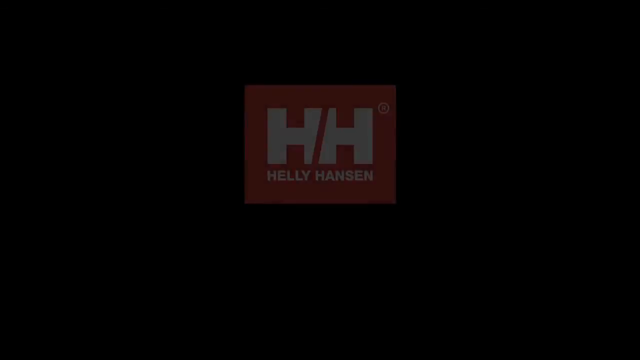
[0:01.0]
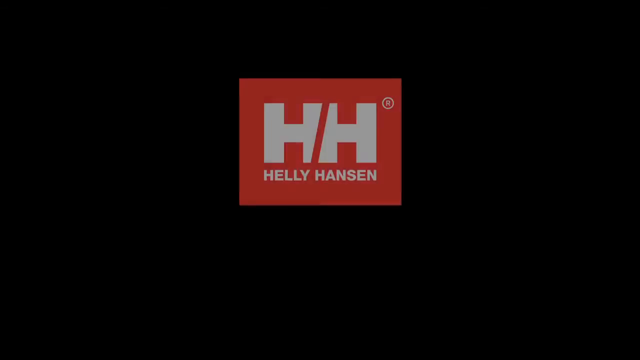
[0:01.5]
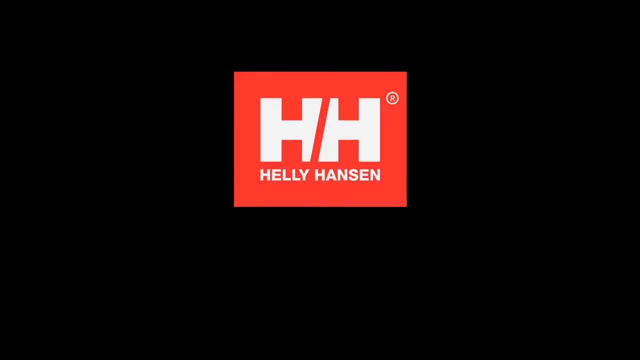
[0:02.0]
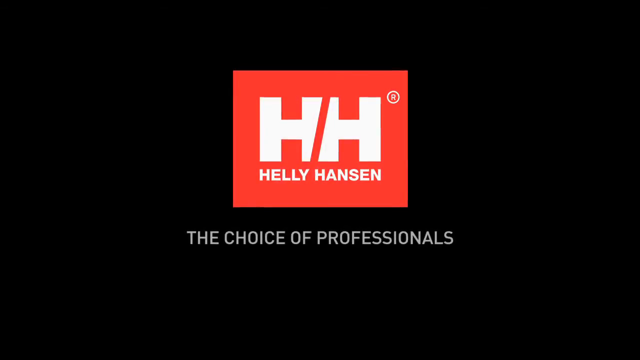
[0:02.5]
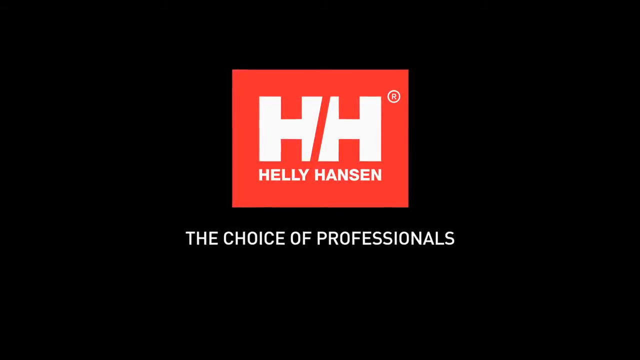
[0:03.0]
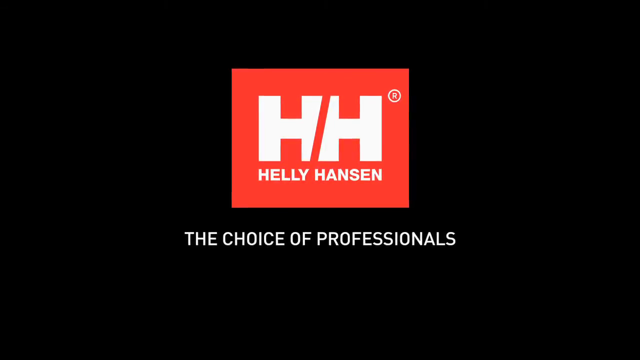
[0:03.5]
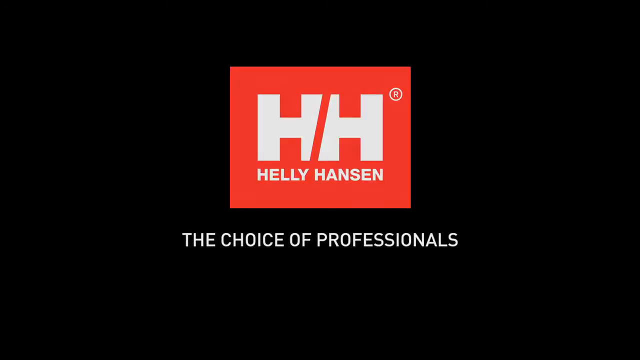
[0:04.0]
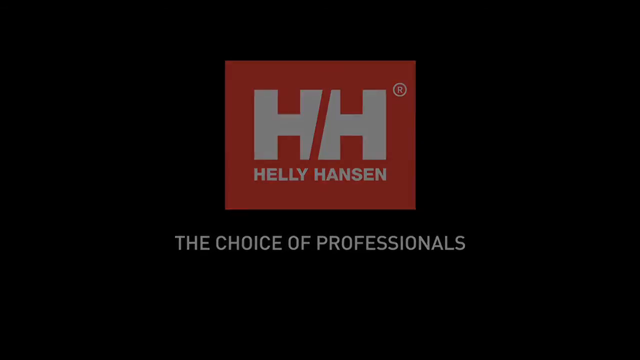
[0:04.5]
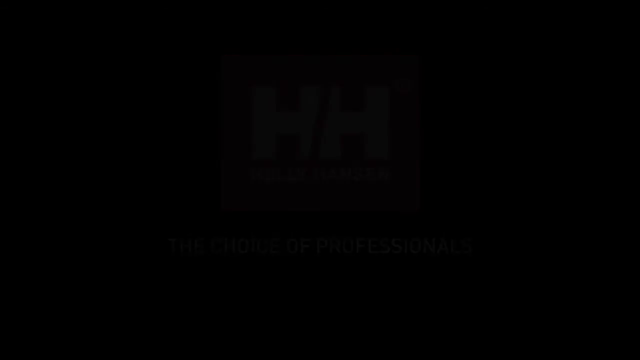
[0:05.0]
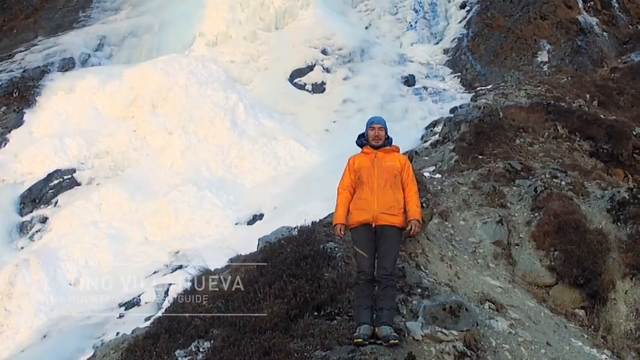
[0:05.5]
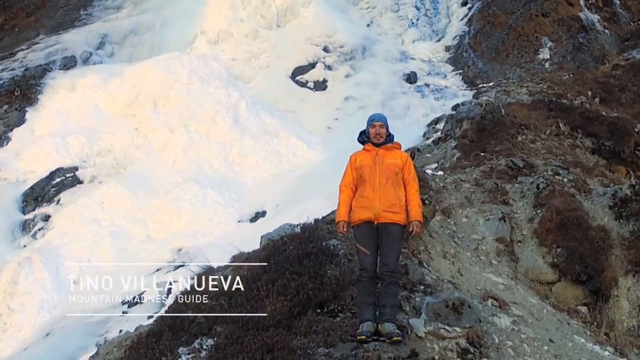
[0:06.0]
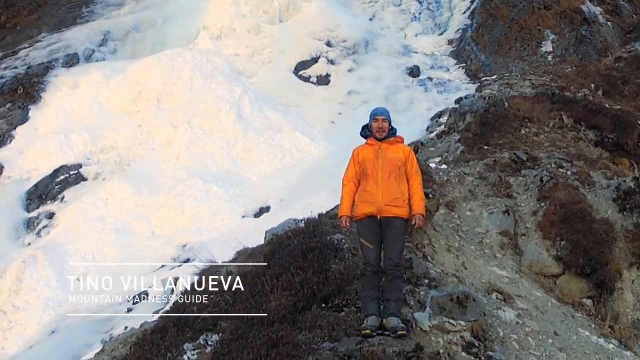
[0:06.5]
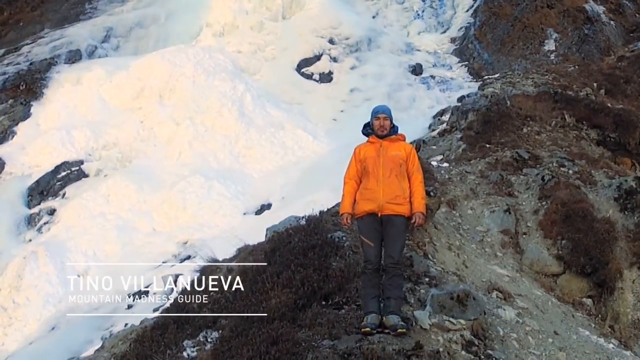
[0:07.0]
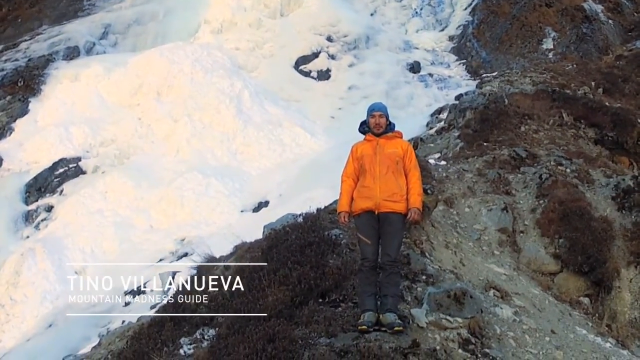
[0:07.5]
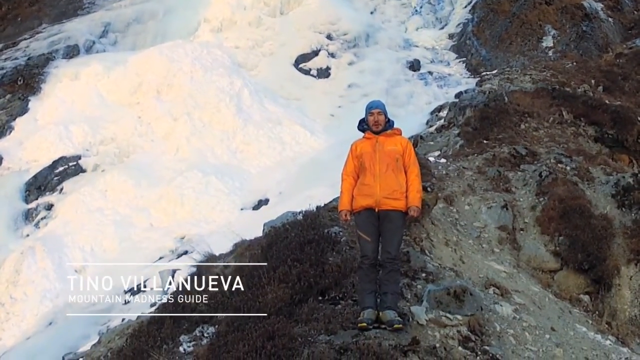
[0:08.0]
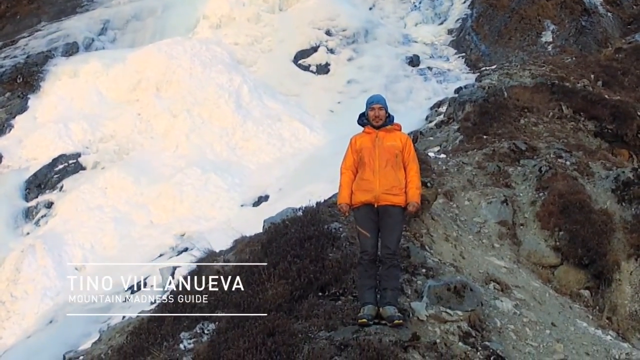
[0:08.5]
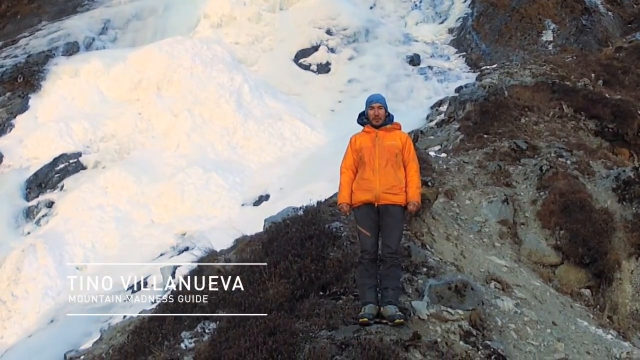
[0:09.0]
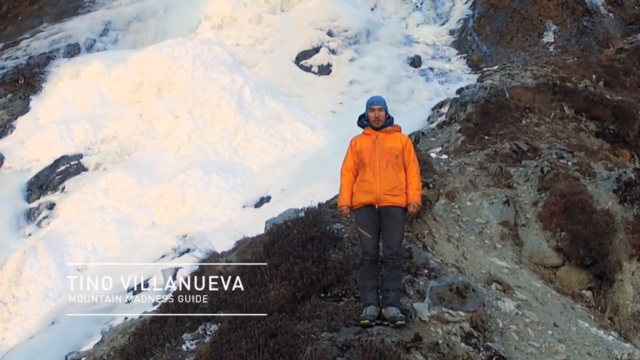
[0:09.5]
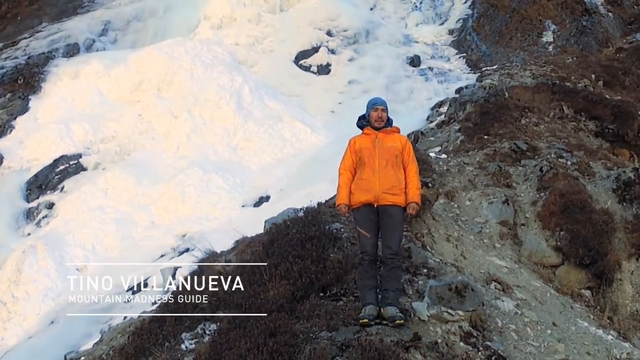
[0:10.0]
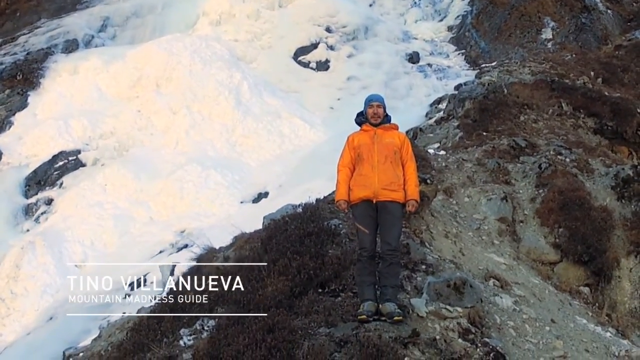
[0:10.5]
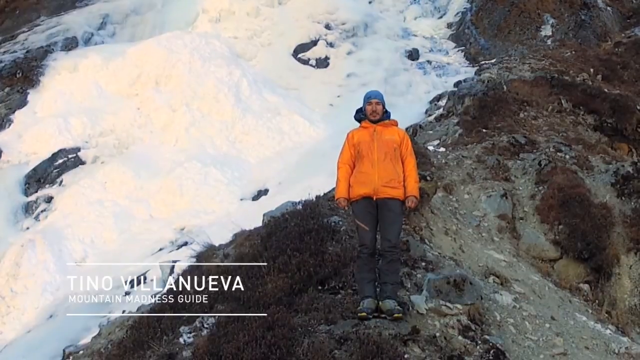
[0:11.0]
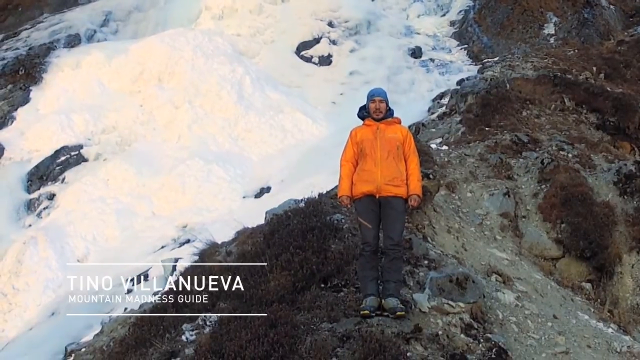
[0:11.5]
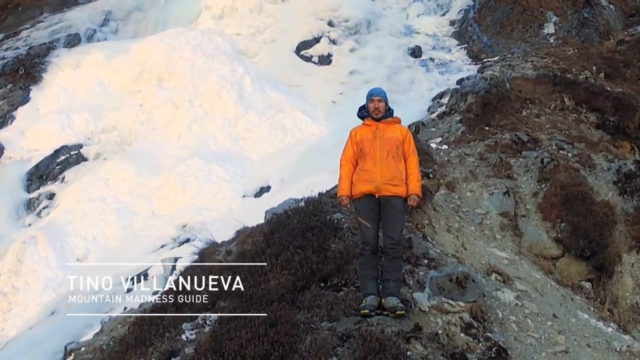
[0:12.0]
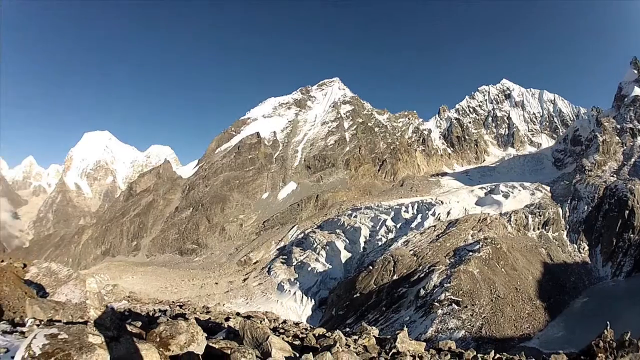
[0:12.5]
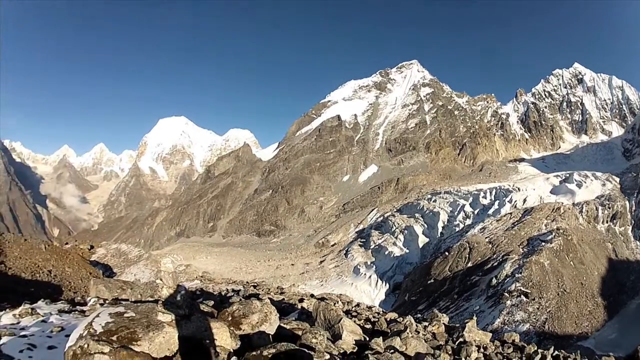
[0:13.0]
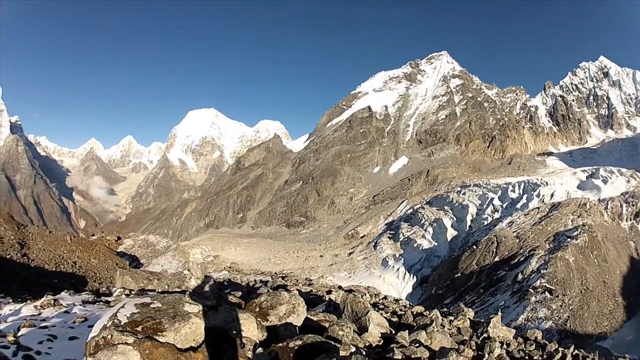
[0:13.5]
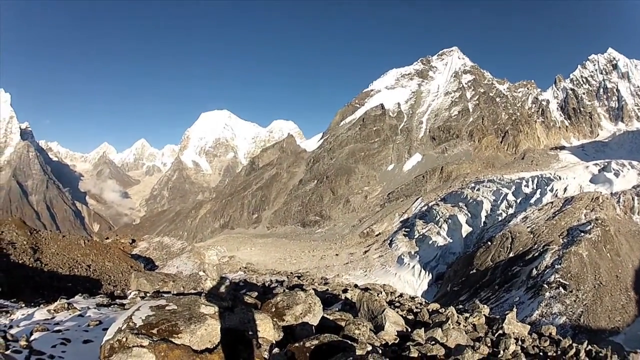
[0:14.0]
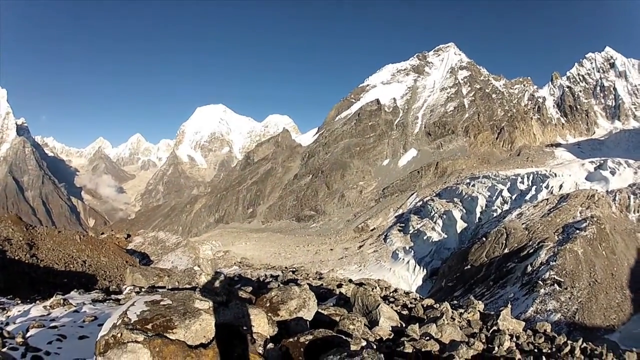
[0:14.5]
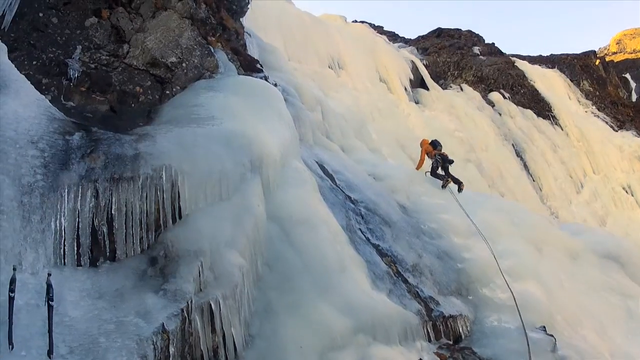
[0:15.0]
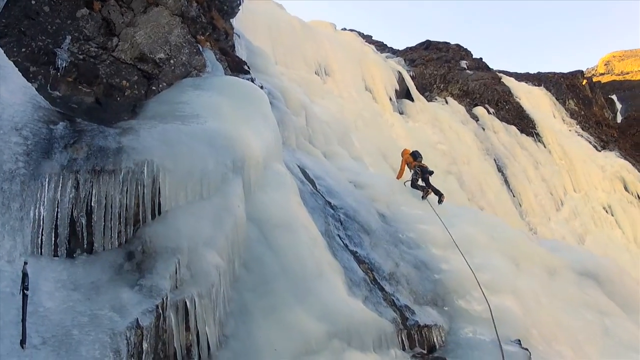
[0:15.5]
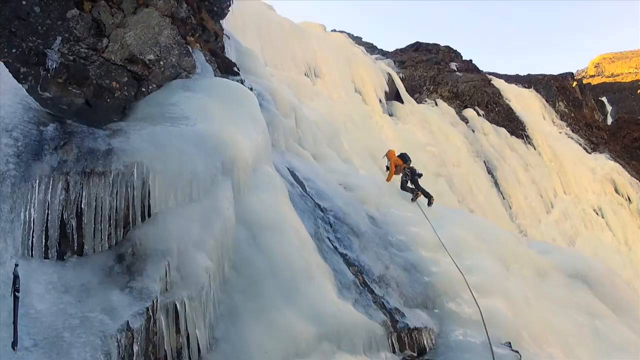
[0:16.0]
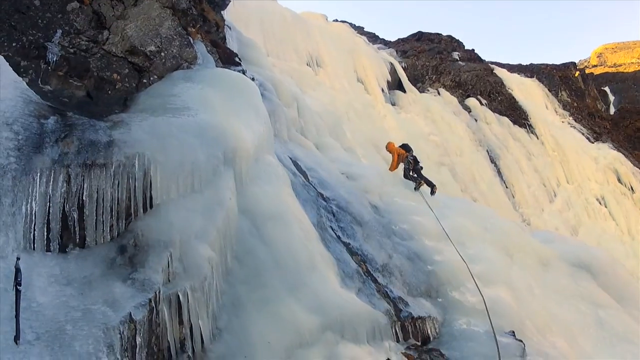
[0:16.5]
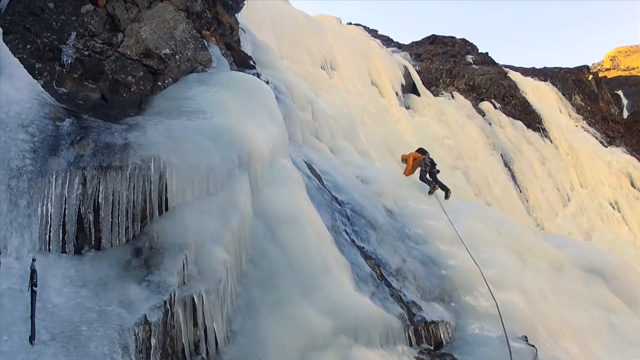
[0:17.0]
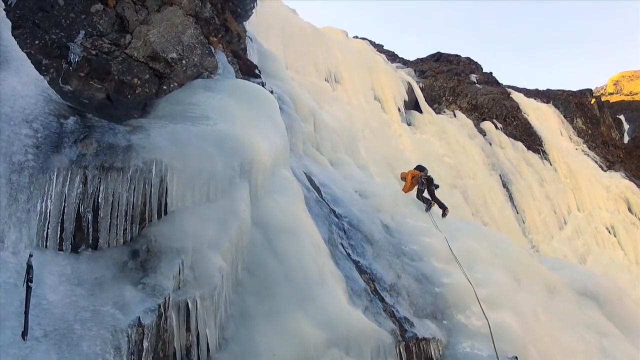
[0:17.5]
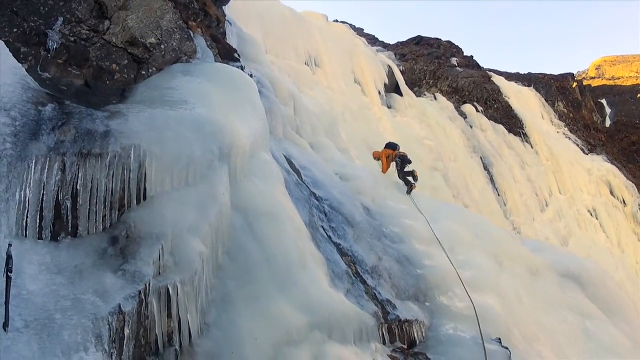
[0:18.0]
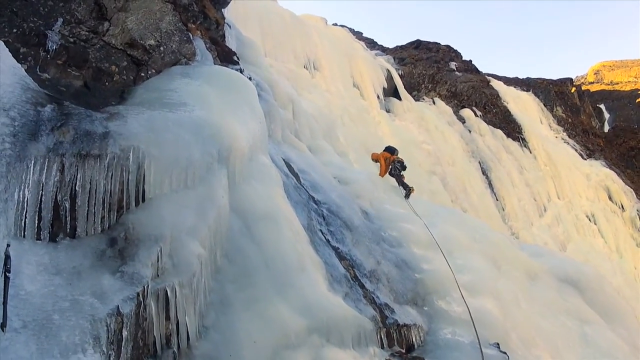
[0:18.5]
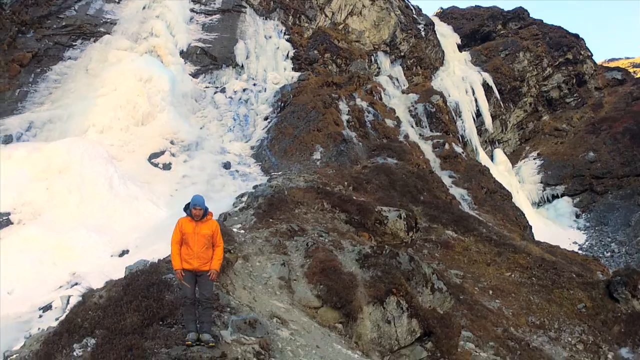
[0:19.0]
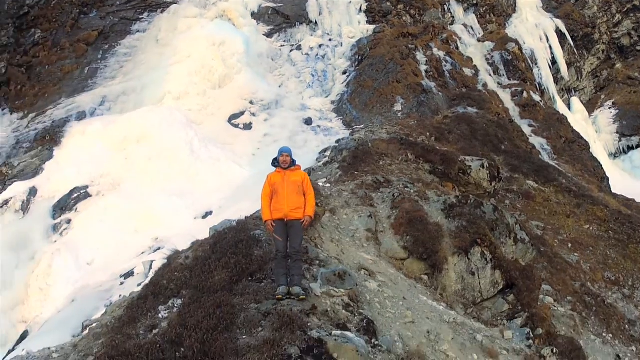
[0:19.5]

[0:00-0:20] After a black screen, a red, roughly rectangular logo appears with two capital H's and the text "Heli Hansen, the choice of professionals." Tino Villanueva, a mountain madness guide, is dressed in orange: an orange jacket, gray pants and boots, with no gloves on. He has something like a hoodie and something covering his head. He seems to be standing by what may be a mountain, with snow on the ground, and he talks to the camera. The view then shows the mountains, all of their tops covered in snow. Someone climbs up what may be ice and snow, digging in and stepping up, digging in and stepping up. The shot then returns to the first man.